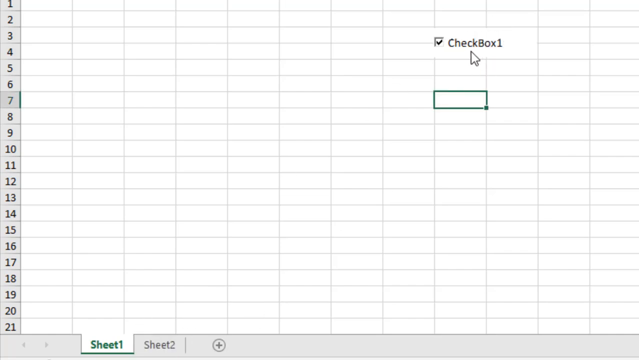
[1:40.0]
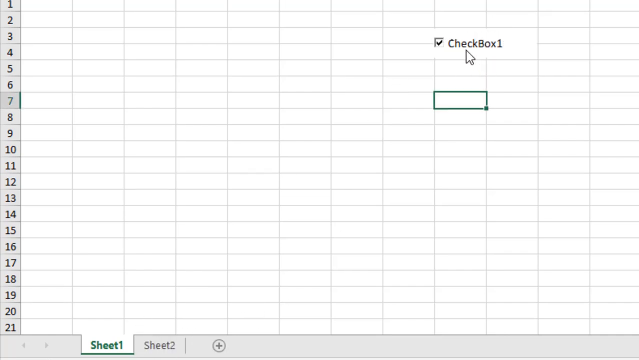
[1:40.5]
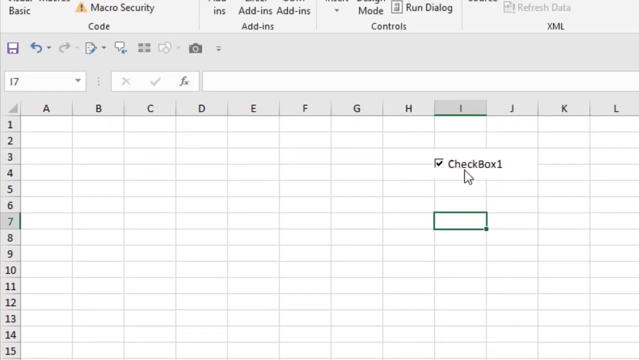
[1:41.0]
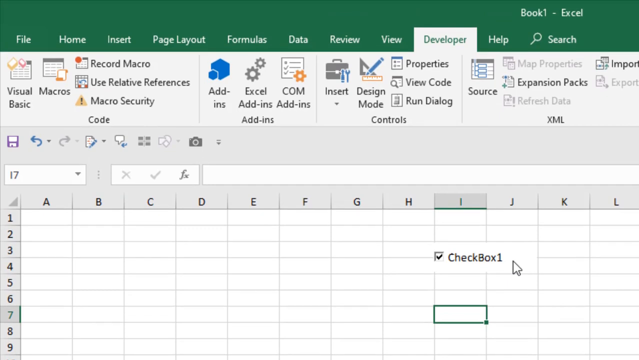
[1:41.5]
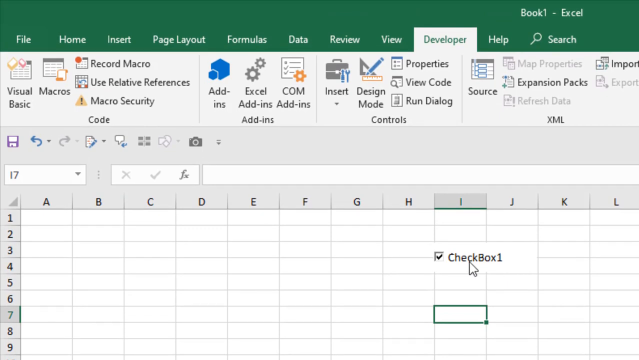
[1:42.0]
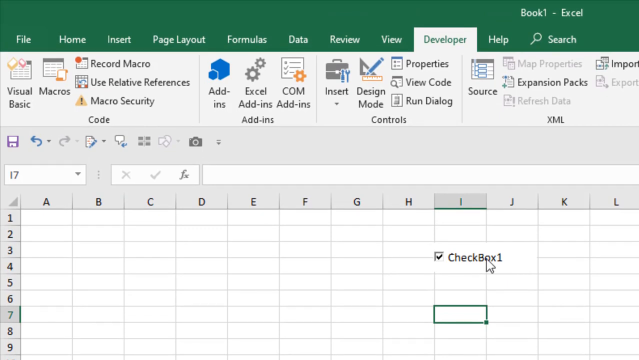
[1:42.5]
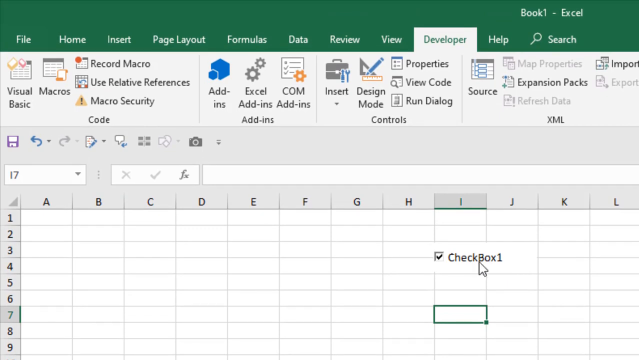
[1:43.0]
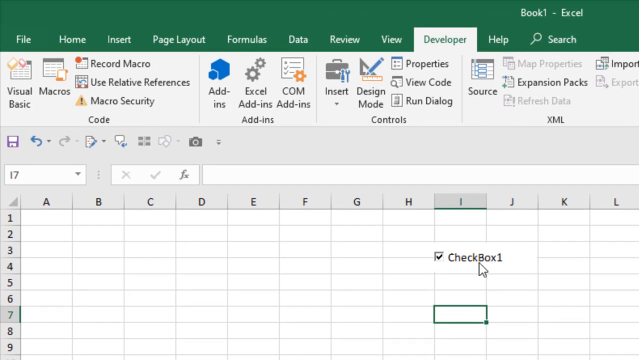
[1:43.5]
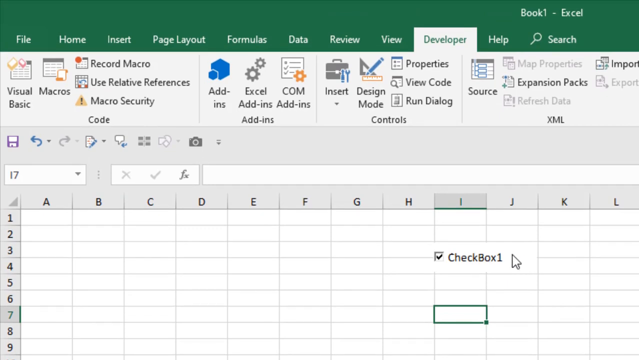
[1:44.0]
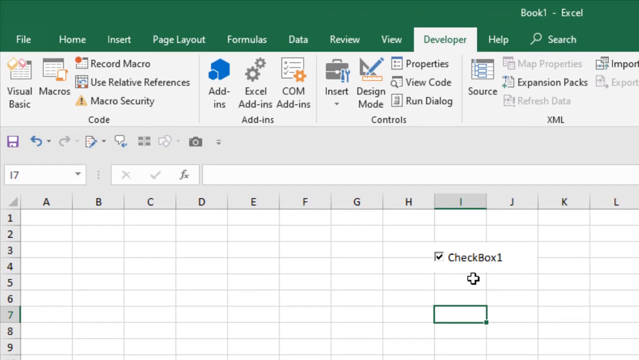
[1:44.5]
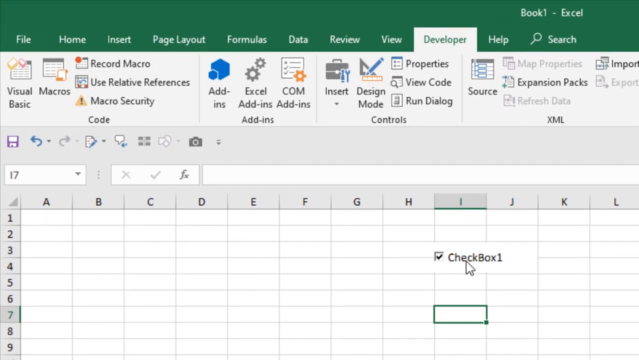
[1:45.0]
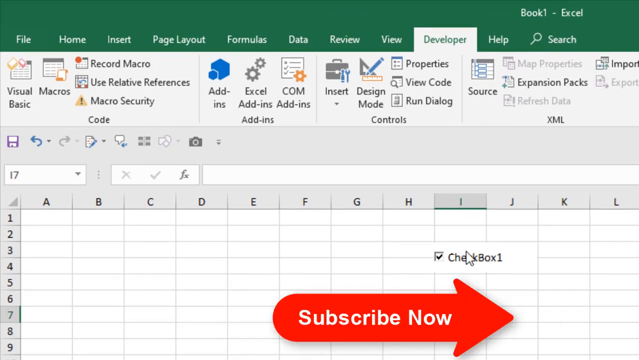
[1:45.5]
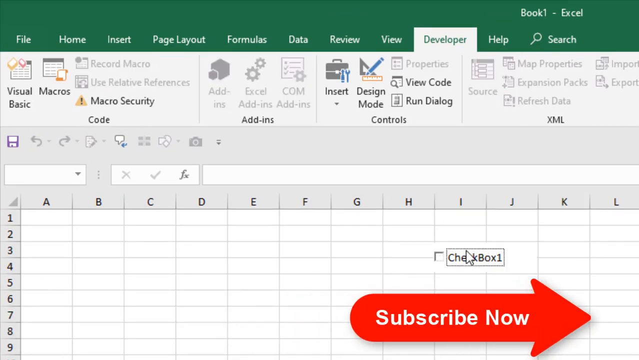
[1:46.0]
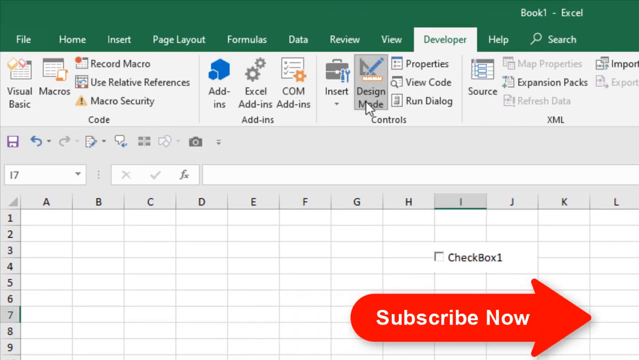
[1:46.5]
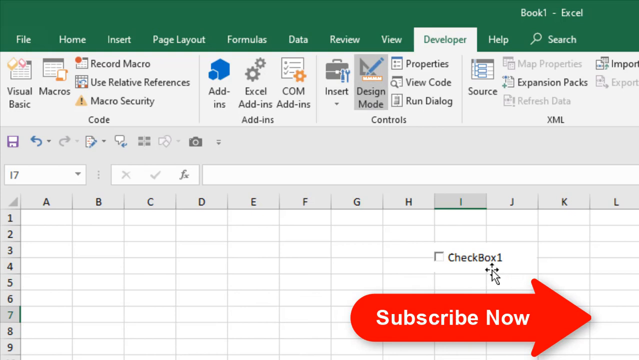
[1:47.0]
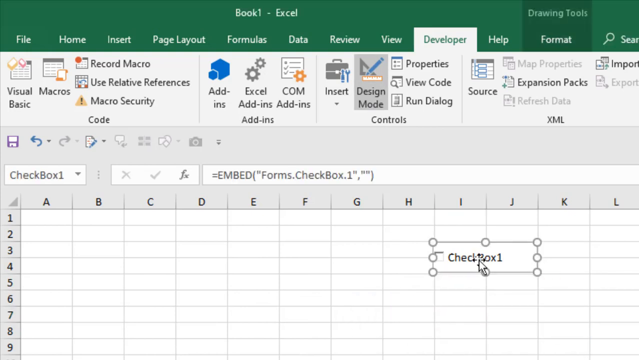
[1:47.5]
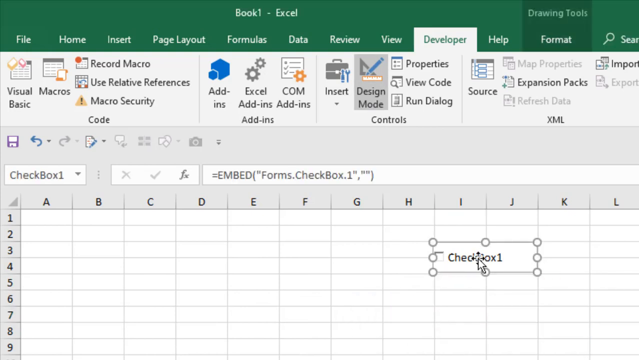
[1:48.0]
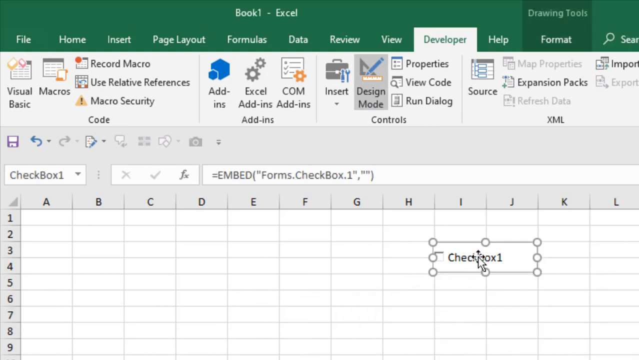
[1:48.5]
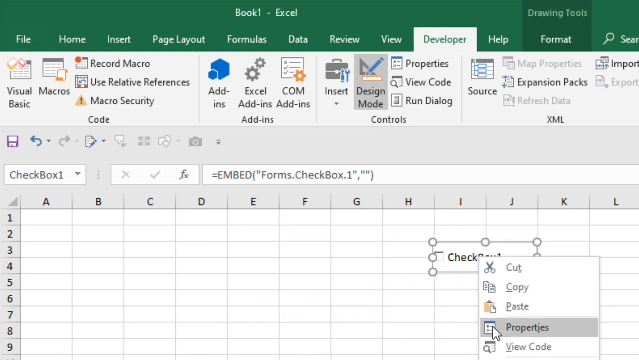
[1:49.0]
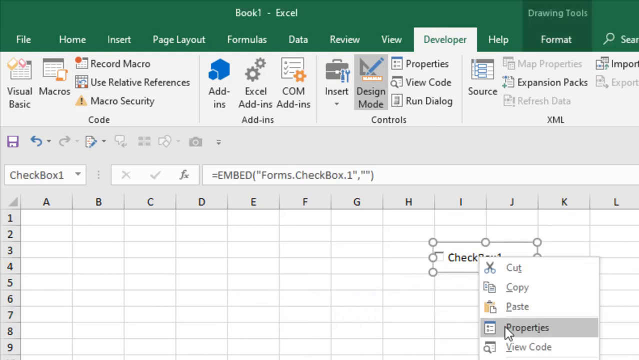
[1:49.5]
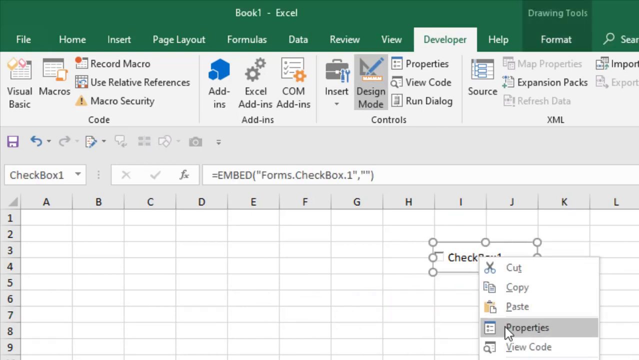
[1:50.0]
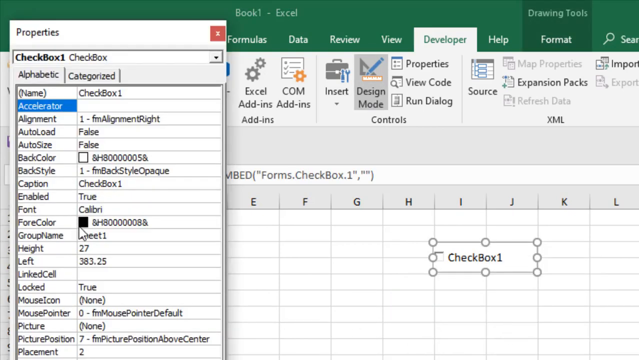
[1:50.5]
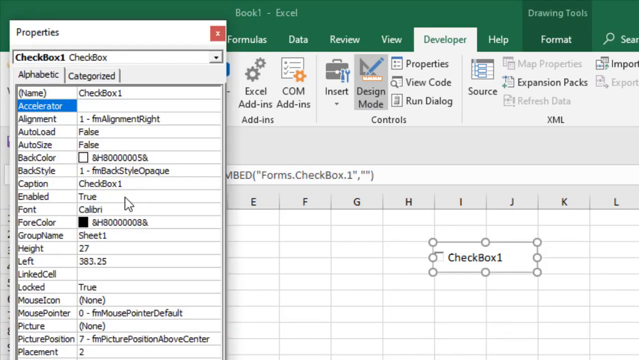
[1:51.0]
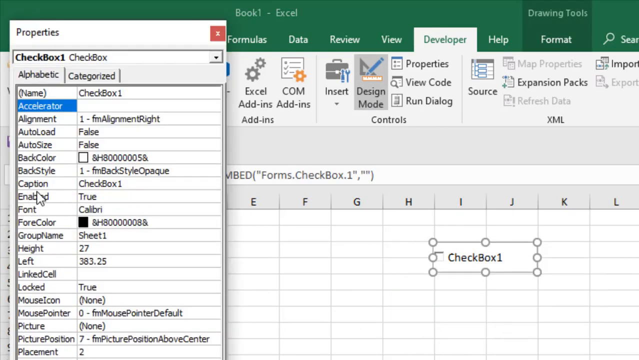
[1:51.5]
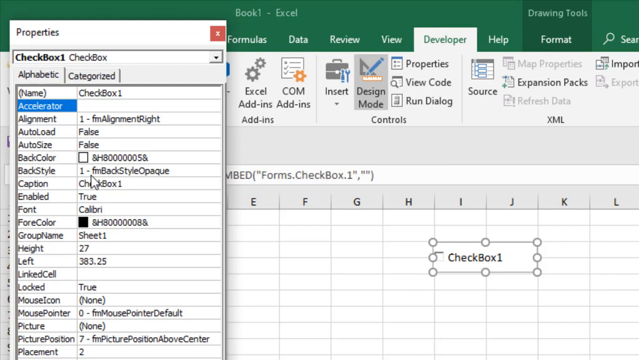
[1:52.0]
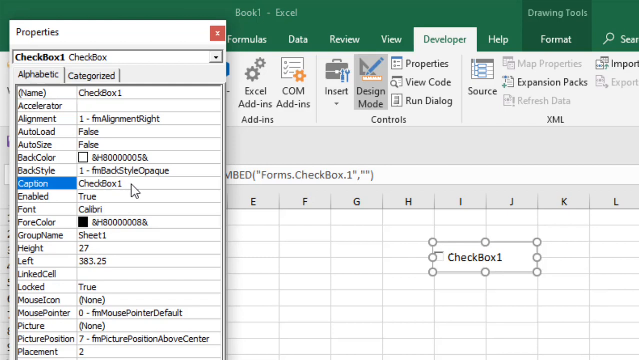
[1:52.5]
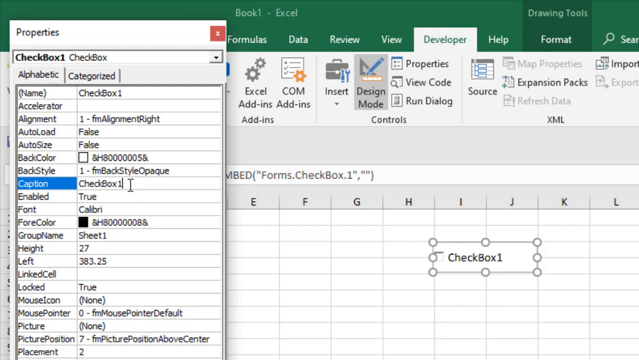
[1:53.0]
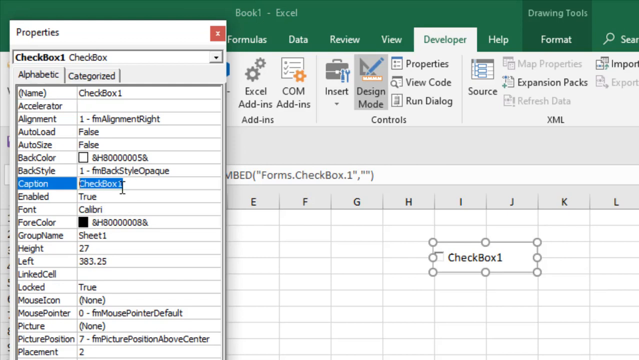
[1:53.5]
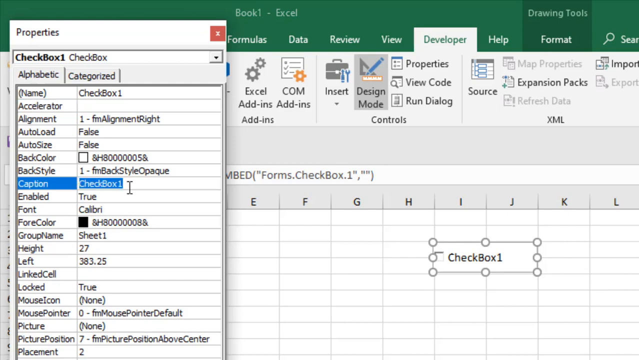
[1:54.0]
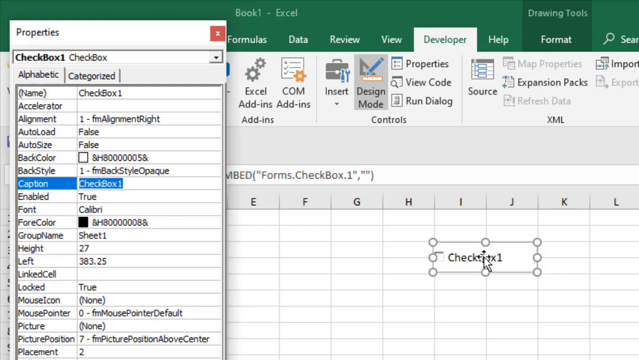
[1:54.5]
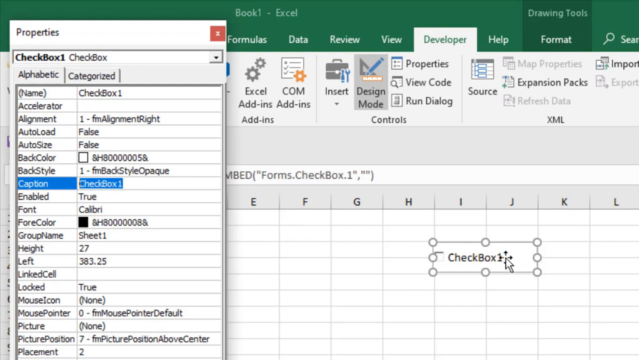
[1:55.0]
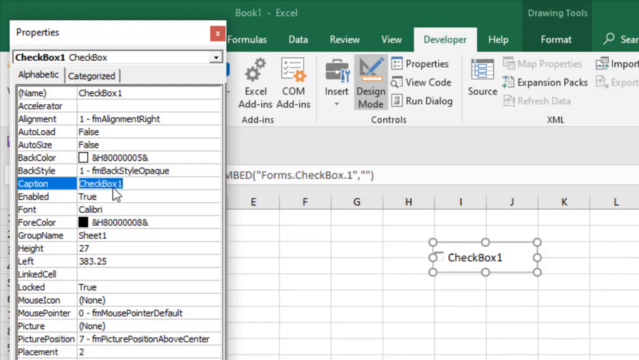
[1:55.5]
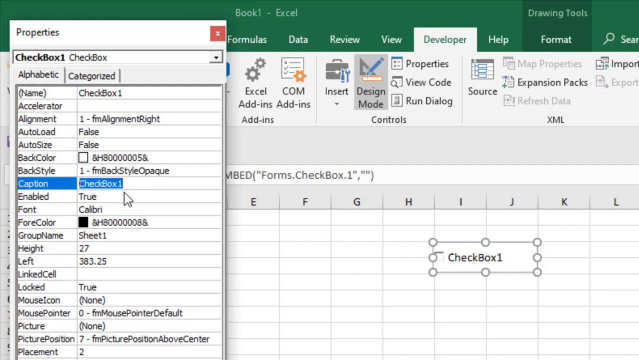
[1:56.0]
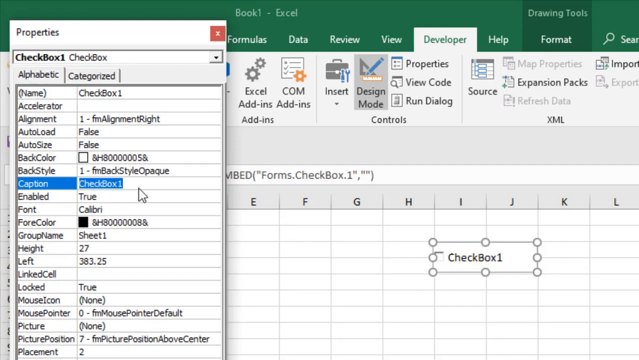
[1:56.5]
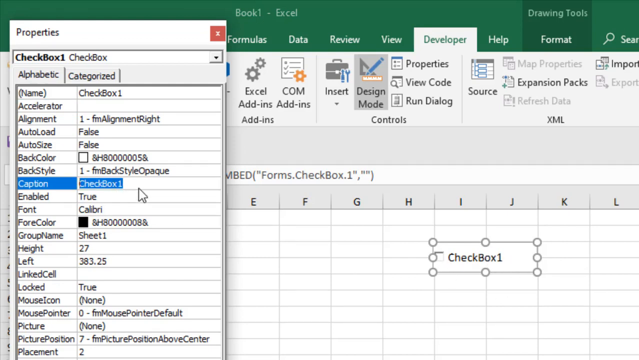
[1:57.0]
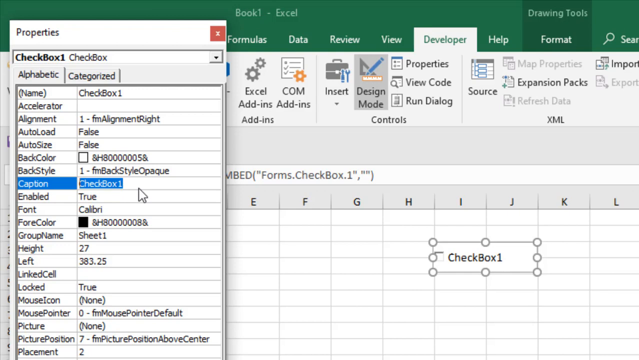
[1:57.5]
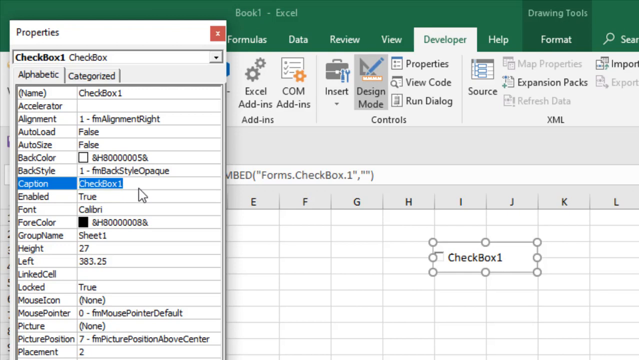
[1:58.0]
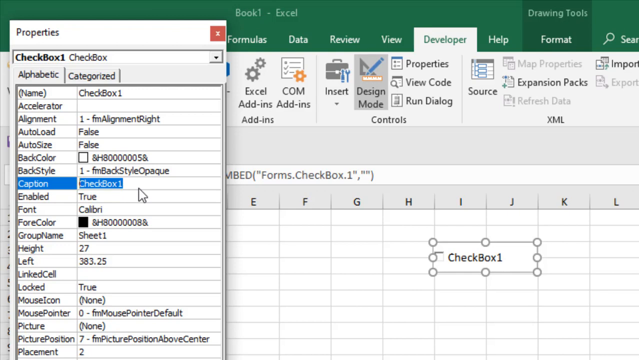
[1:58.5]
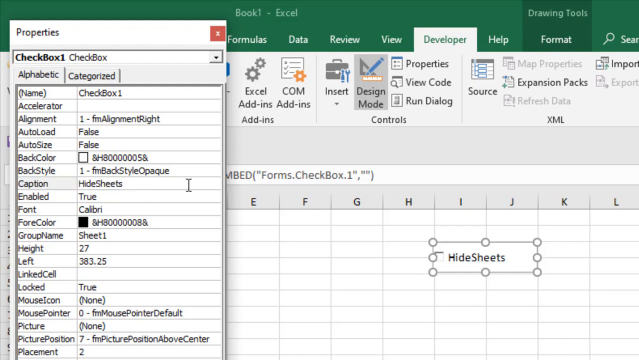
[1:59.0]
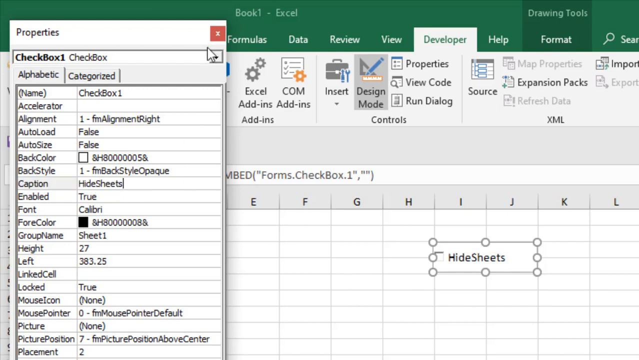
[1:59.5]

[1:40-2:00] The green stripe at the top of the computer screen holds, in white text from left to right, the words "File," "Home," "Insert," "Page Layout," "Formulas," "Data," "Review," "View," "Developer," "Help" and "Search." The person moves the mouse over the chart graph beneath those words, where columns A to L run left to right and rows 1 to 9 are visible going down. He places the mouse over the third box down in column I, and a small square pops up reading "check box one." A red arrow then comes in from the left side all the way to the right side, with "subscribe now" written in white inside it.